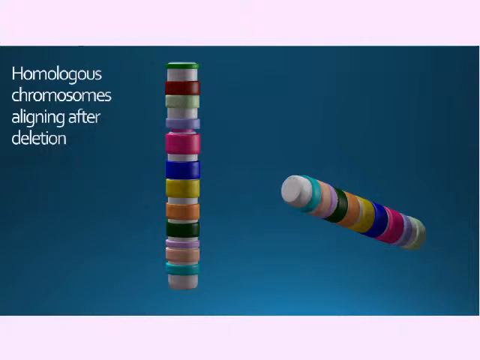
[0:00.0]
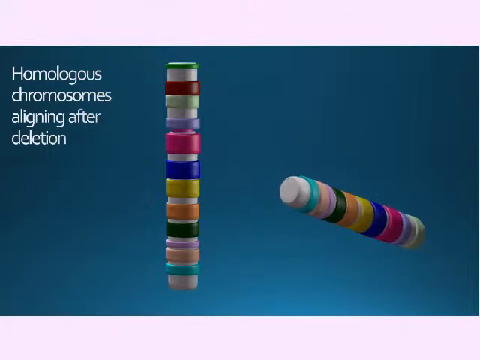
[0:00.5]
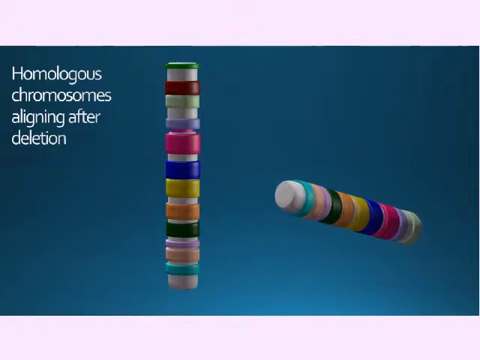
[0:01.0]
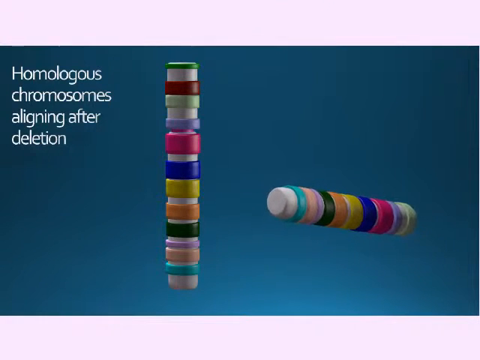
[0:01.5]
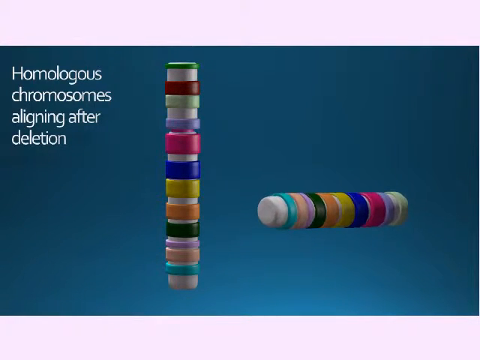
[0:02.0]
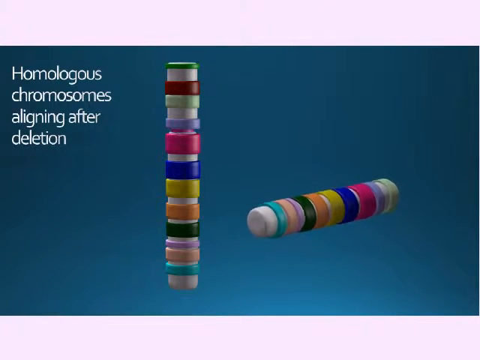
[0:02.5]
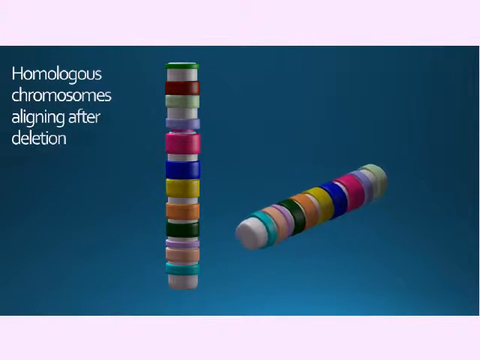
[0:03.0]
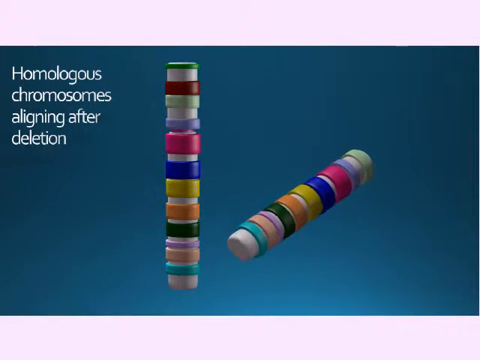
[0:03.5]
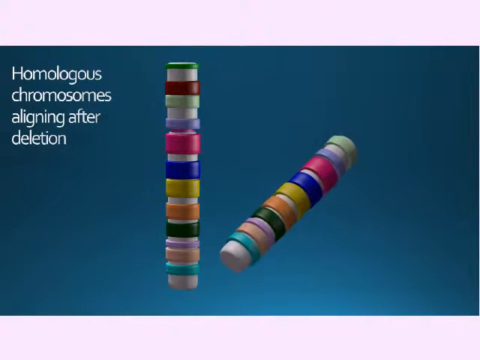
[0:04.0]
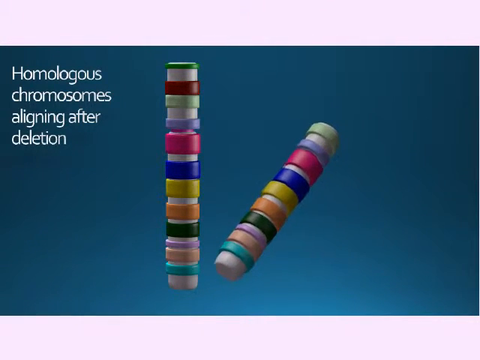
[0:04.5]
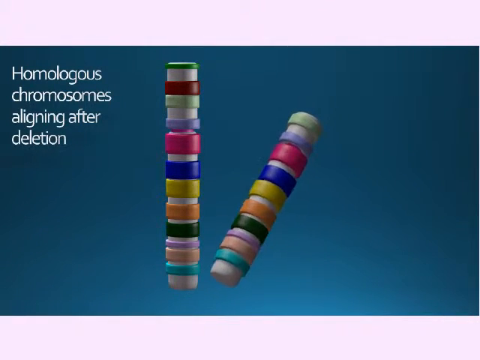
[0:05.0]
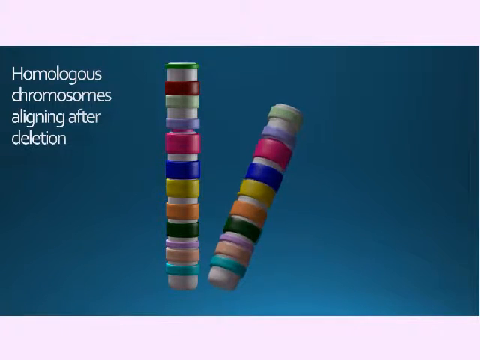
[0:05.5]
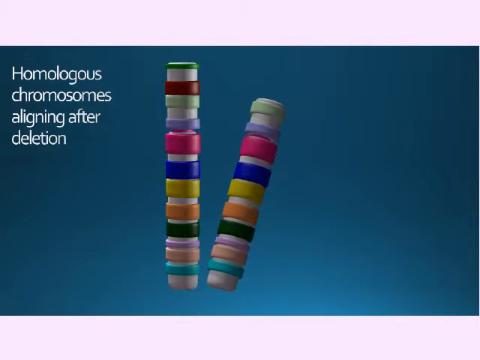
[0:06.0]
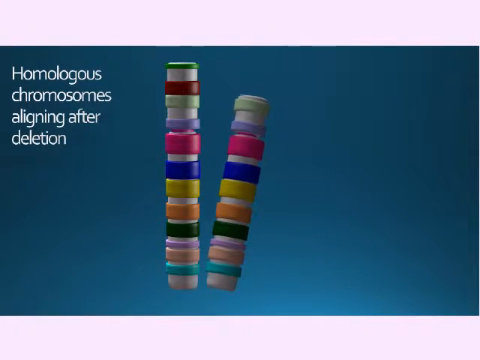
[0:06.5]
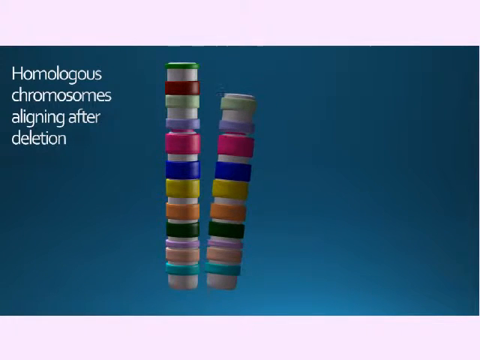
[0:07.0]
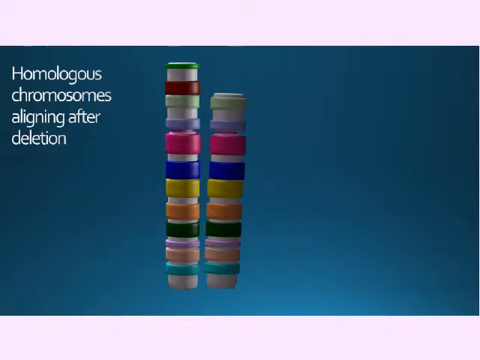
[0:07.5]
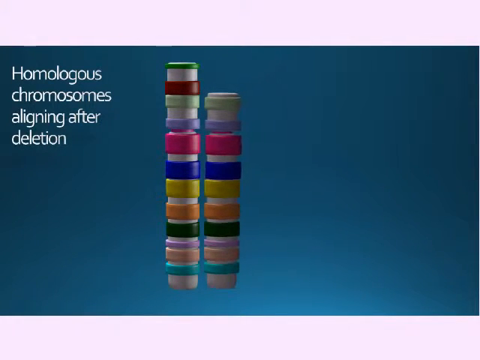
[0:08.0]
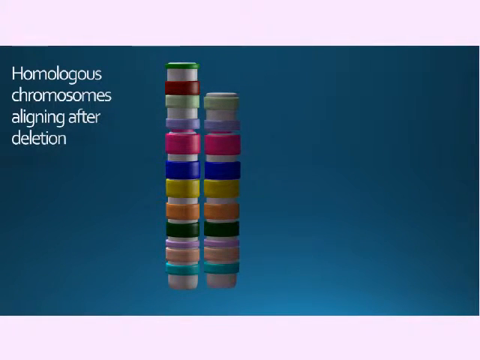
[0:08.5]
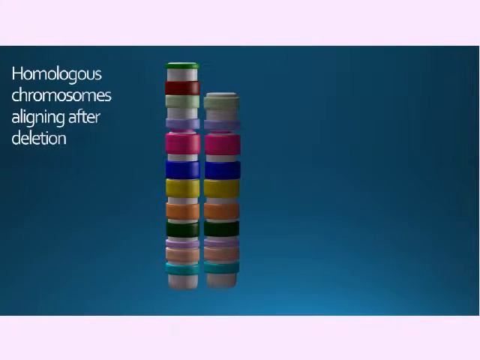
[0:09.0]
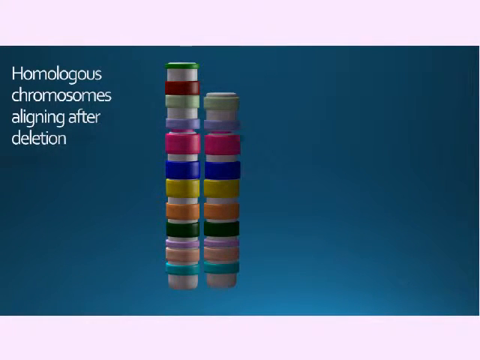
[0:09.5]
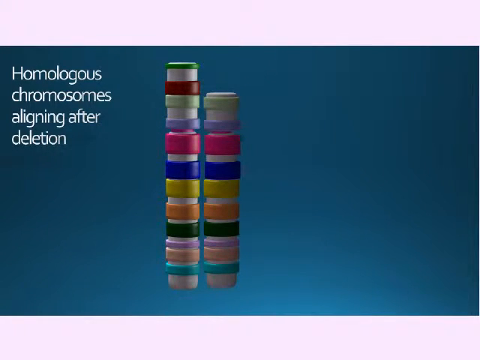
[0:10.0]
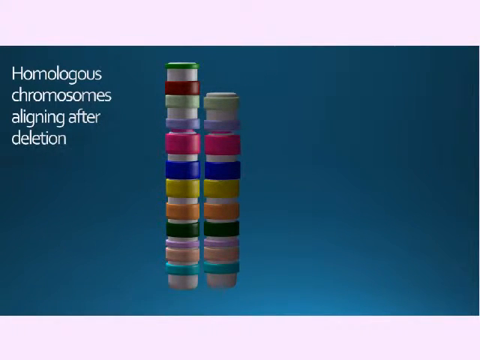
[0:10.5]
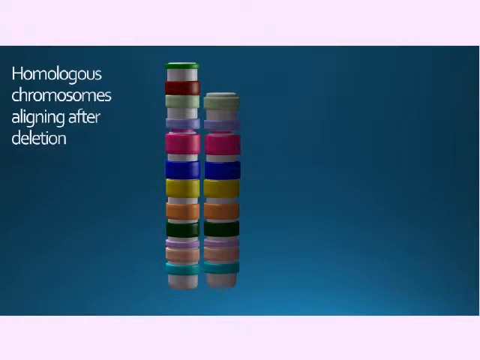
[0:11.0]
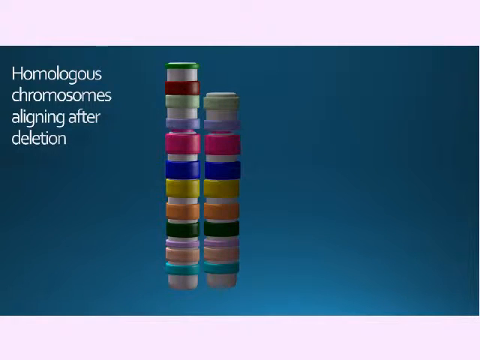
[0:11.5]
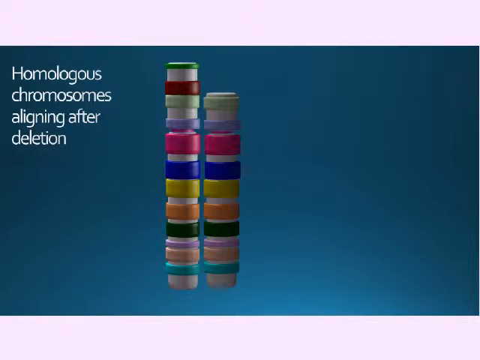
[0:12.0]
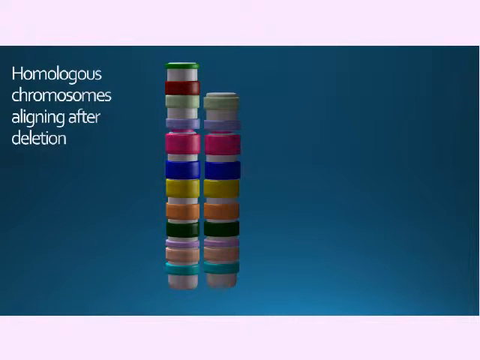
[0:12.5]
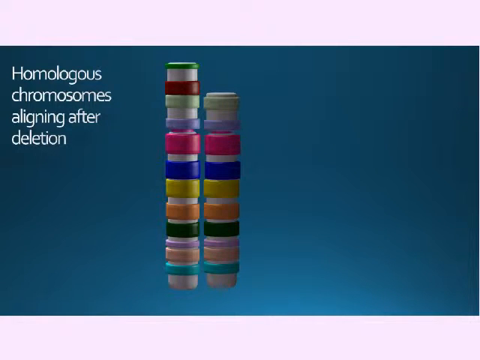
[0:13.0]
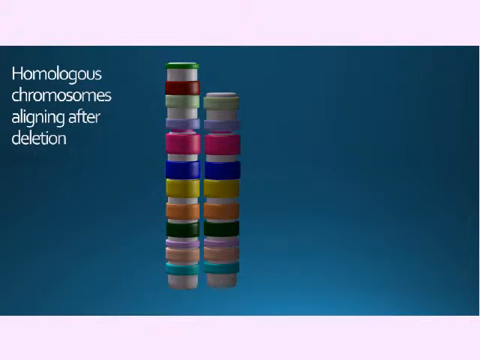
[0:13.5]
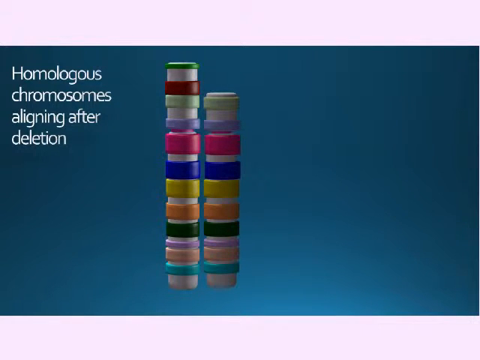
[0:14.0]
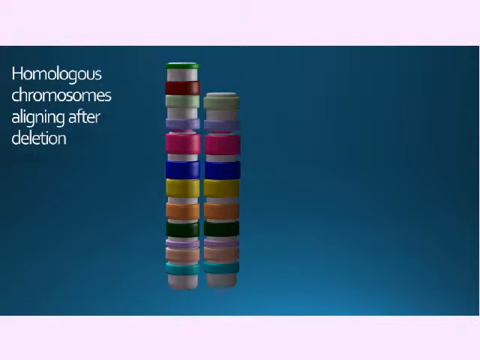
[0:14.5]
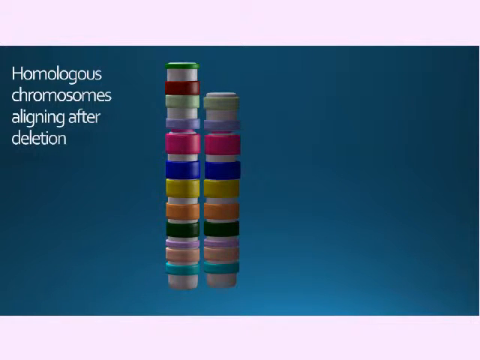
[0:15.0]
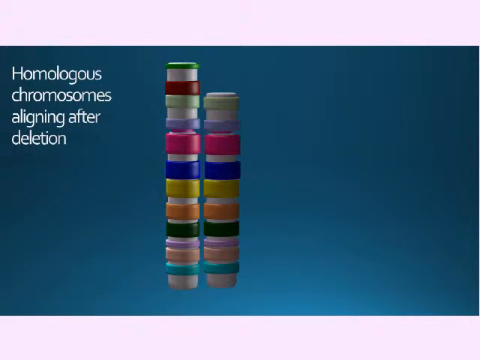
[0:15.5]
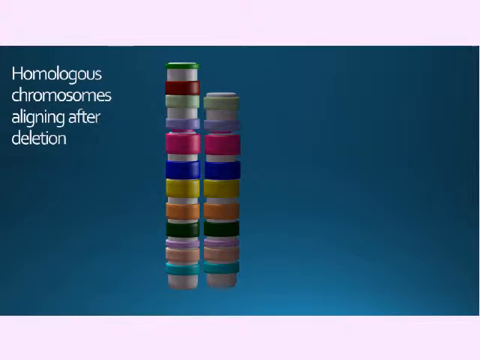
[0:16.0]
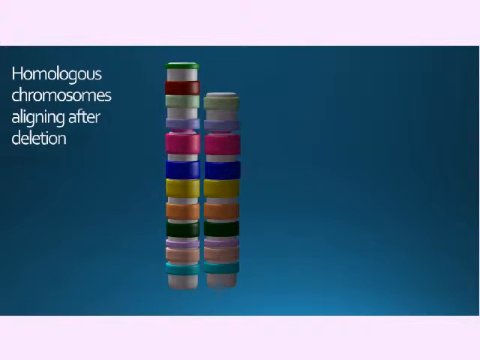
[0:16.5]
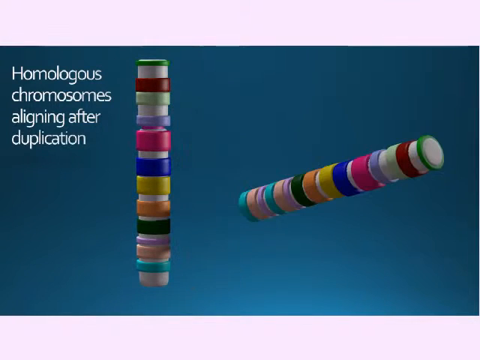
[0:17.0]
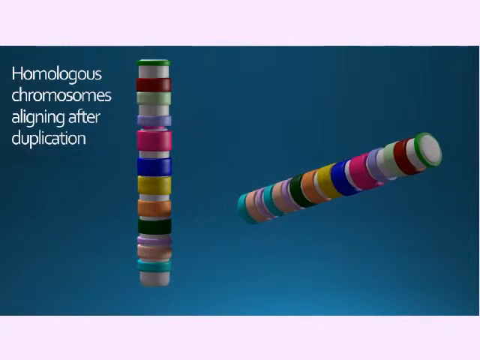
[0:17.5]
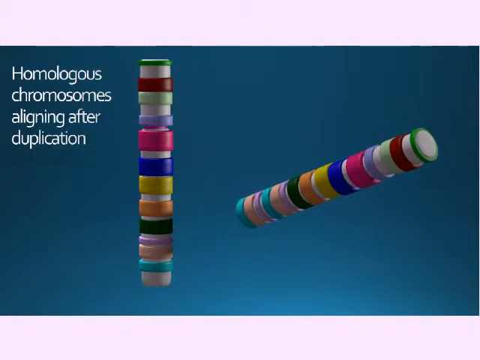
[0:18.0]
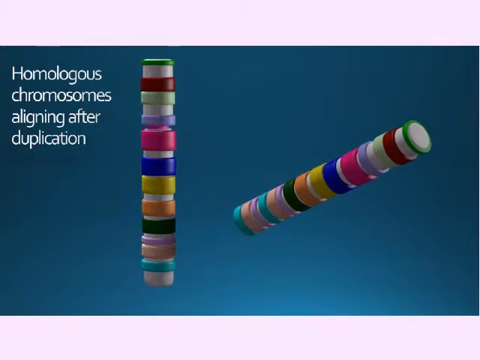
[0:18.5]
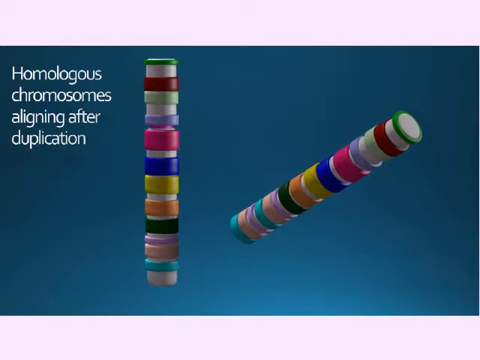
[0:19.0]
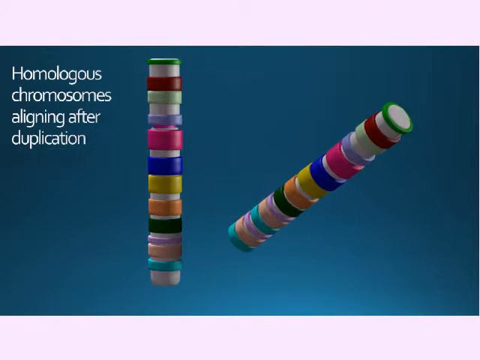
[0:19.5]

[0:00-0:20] Against a dark blue background, white text reads "homologous chromosomes aligning after deletion." In the middle is an object that looks kind of like a white cylinder rod, with bands of different colors running up its whole length, some thicker and some thinner, in colors such as dark green, yellow, dark blue, light purple, orange, peach, turquoise and green. This object is standing up. Another white cylinder bar with colorful bands appears next to it; it seems kind of horizontal at first as it floats through the air, then as it gets closer to the first object it moves into an upright position, ending up standing straight right next to the taller bar. It has the exact same color design and bands, except it is missing the top part of the white bar and the dark red and green bands on top. The shorter bar then disappears, and another long bar kind of starts off horizontally on the right side of the screen, kind of flows through the air, and ends up upright next to the bar standing in the middle of the screen. This one appears to be the exact same height and to contain the exact same color bands as the bar next to it.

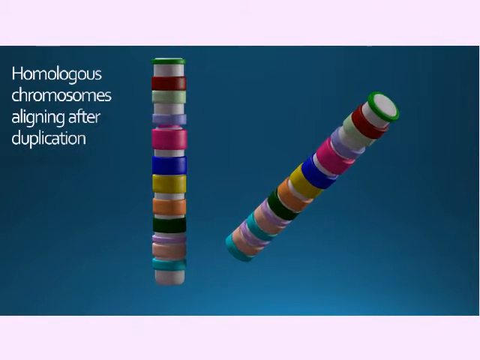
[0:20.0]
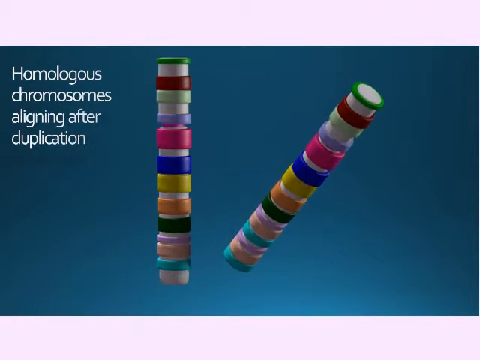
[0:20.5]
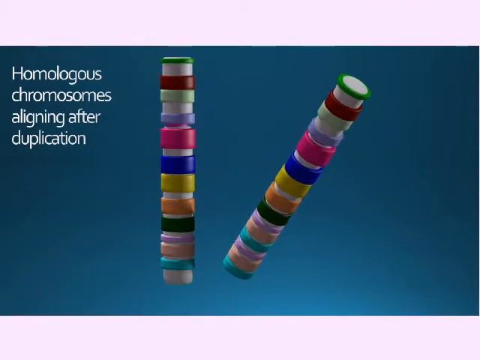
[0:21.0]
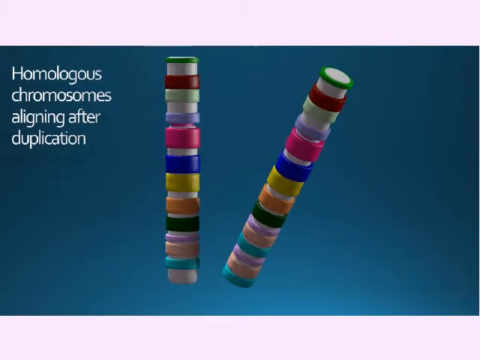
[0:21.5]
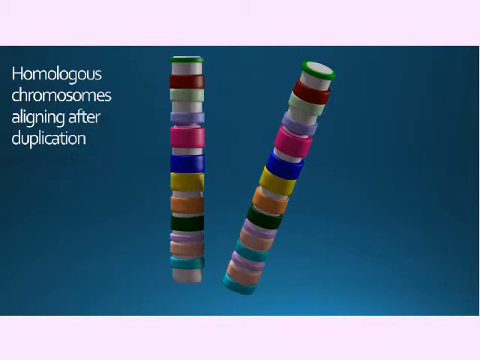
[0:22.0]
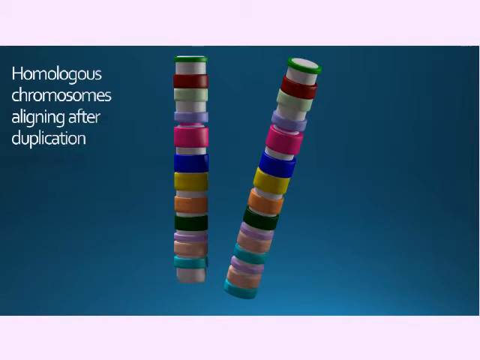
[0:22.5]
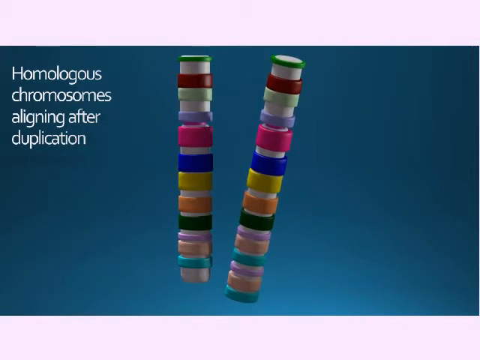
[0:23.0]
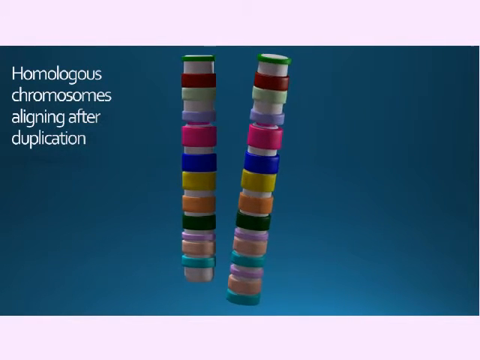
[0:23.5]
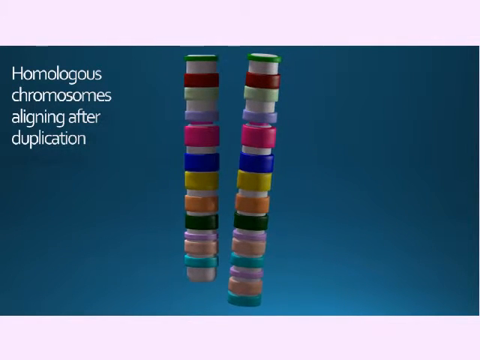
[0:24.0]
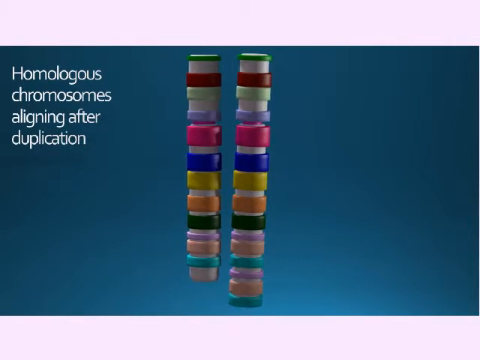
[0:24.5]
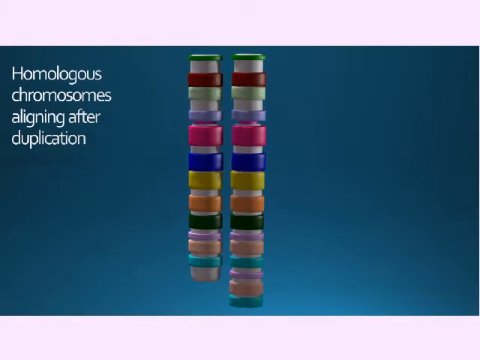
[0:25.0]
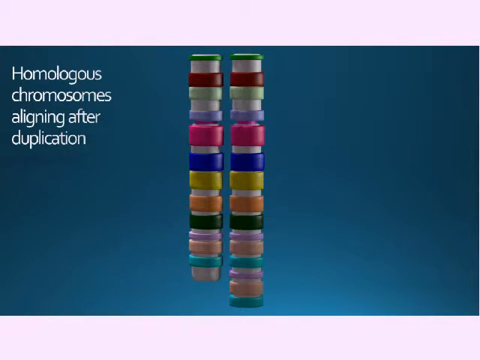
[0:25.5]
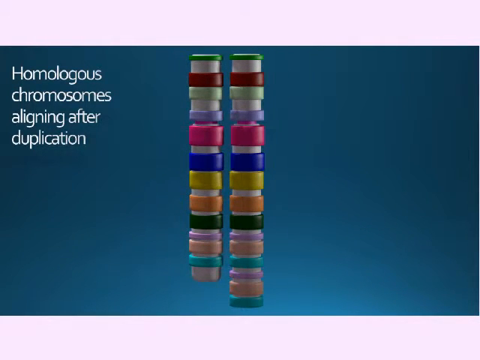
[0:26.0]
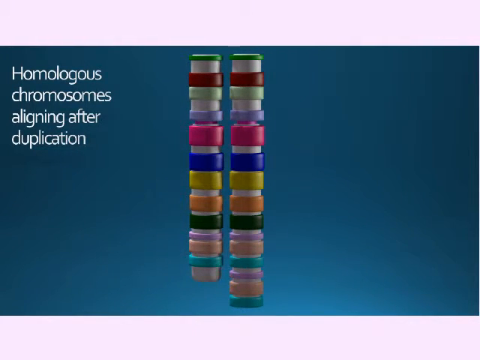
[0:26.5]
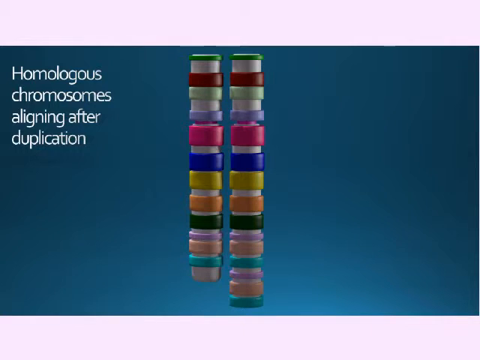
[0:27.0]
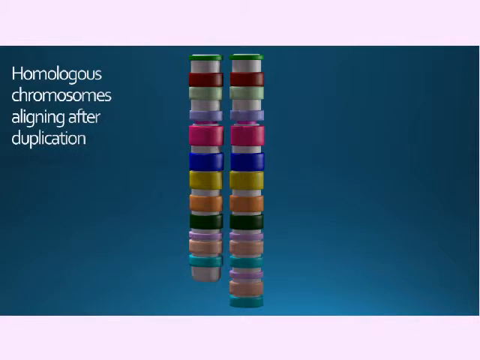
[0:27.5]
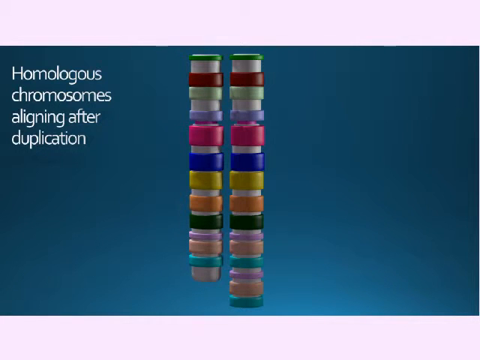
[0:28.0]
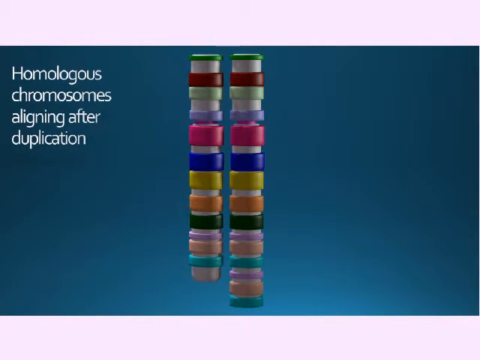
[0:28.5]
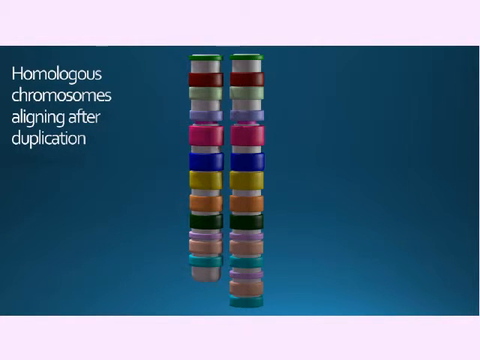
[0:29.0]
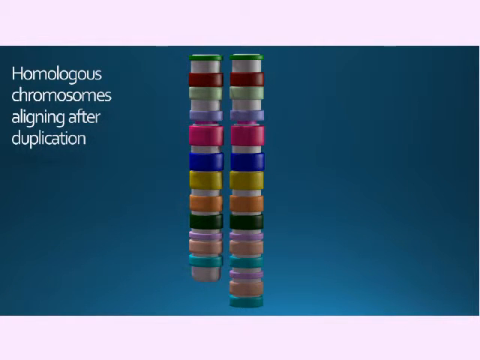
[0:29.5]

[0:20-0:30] A diagram shows homologous chromosomes aligning after duplication. A white rod is on the center-left part of the screen, kind of floating in the air, with color bands of all different colors around it, some thicker and some thinner. Another bar that looks identical, with color bands, flies through the background and lands so that it stands straight up right next to the first bar. All of the bands are identical, except the second bar is a bit longer on the bottom and contains an extra light pink, light peach and teal color band.